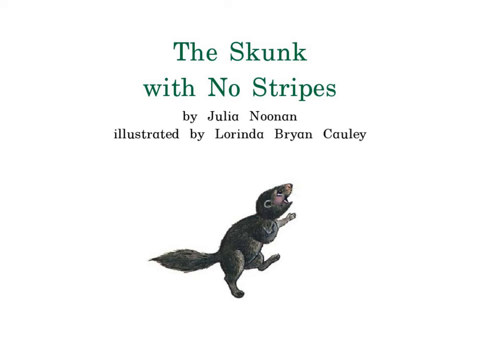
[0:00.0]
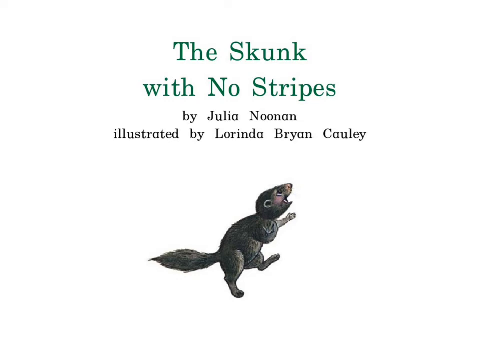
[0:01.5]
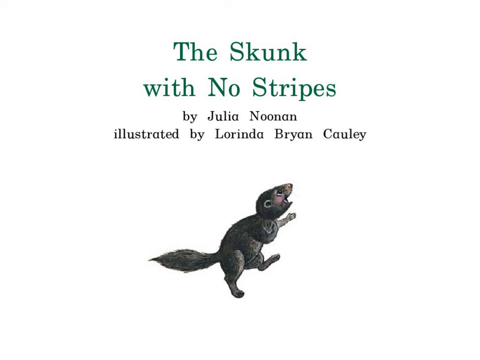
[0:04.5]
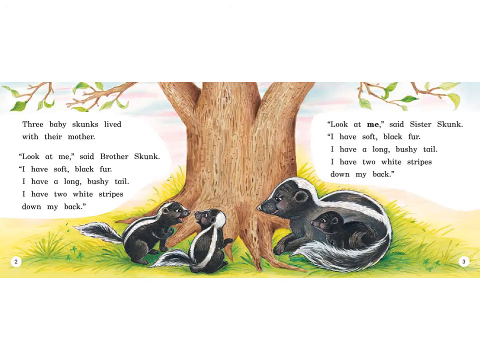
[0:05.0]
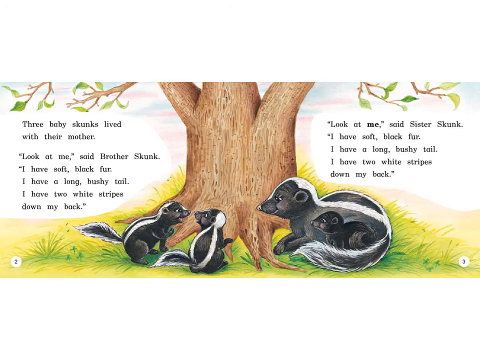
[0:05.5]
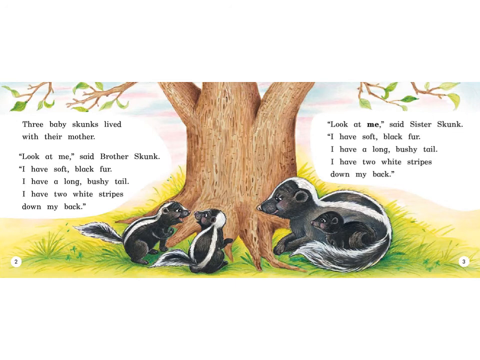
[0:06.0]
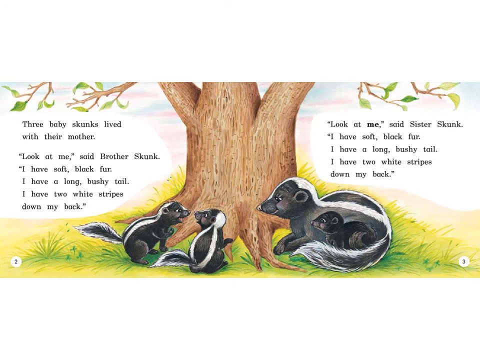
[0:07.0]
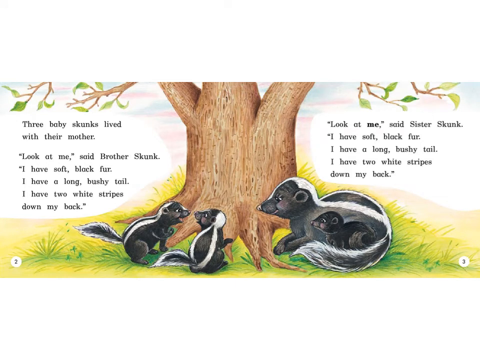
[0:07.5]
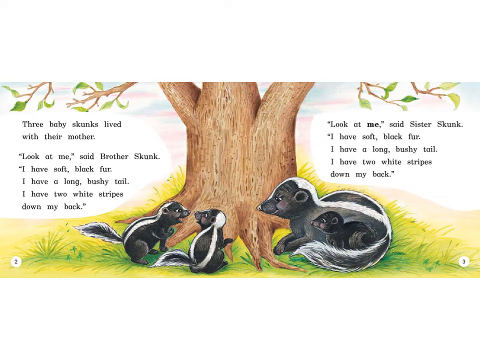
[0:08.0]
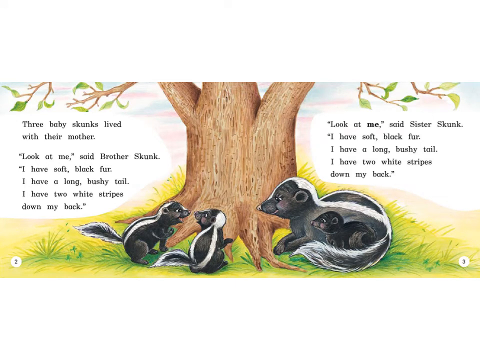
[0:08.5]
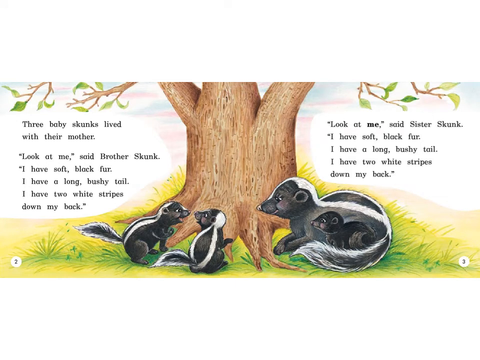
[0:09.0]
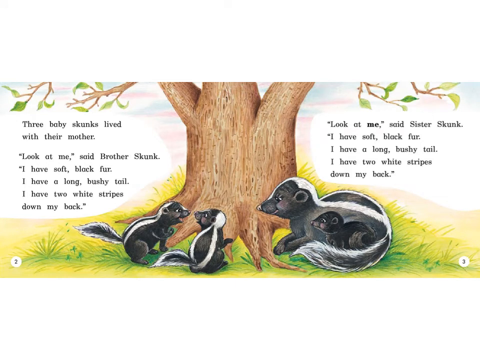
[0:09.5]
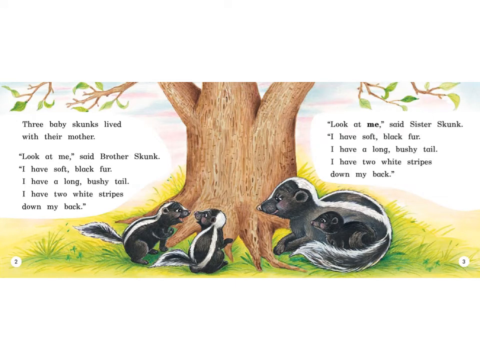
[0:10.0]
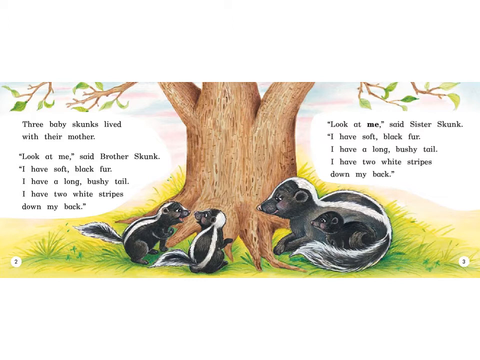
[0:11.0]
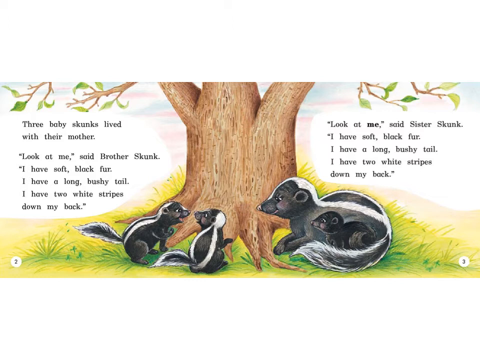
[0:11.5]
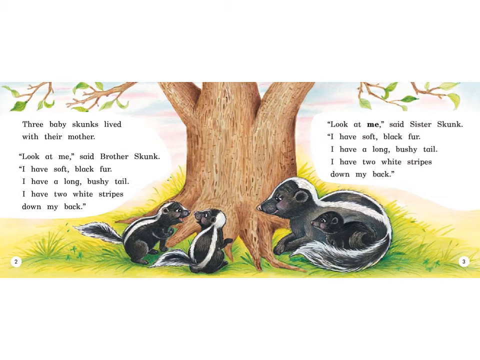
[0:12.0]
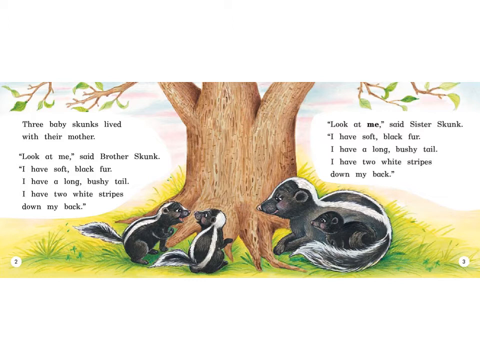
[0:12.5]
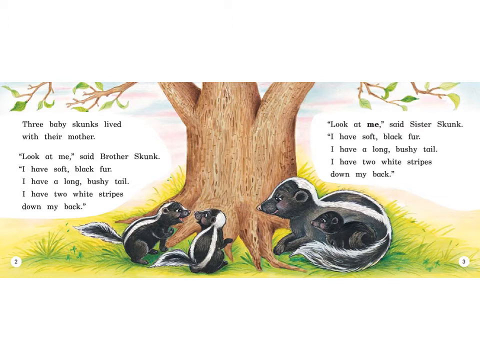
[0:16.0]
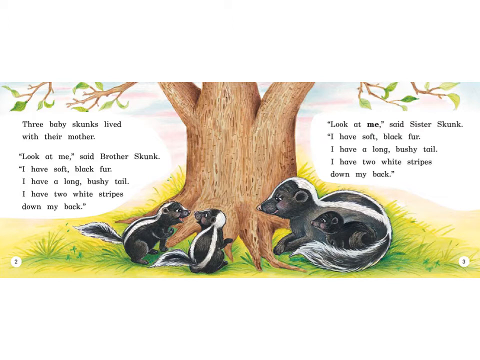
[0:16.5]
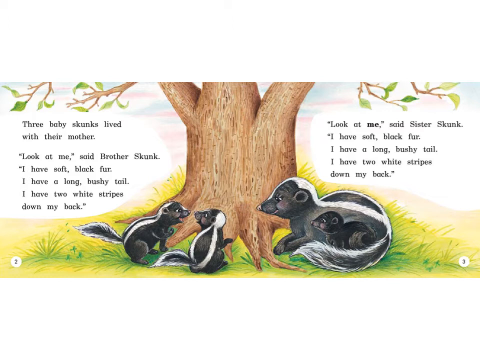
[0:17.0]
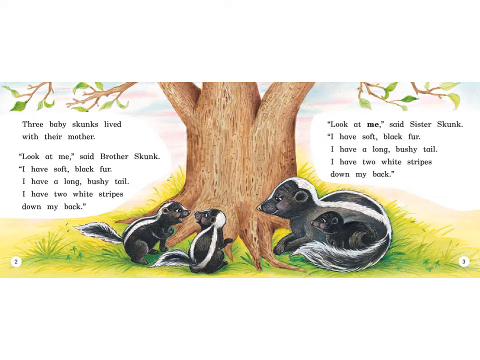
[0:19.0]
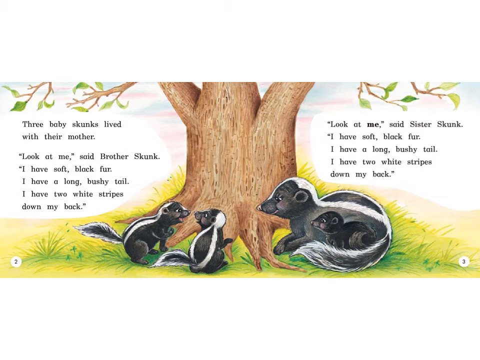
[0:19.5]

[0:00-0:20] The first page reads "The skunk with no stripes by Julia Nonan illustrated by Lorinda Brian Cowley." The video moves to the second page, which has a picture of three skunks seated below a tree in a forest. Text on the page reads "Three baby skunks lived with their mother. Look at me, said brother skunk. I have soft black fur. I have a long bushy tail. I have two white stripes down my back. Look at me, said sister skunk. I have soft black fur. I have a long bushy tail. I have two white stripes down my back." All of the skunks stay in one spot and do not move.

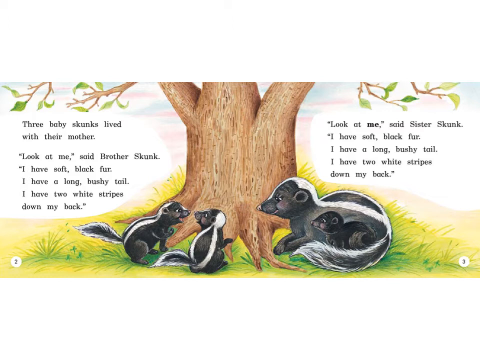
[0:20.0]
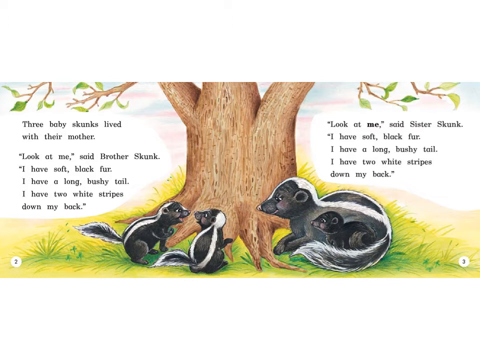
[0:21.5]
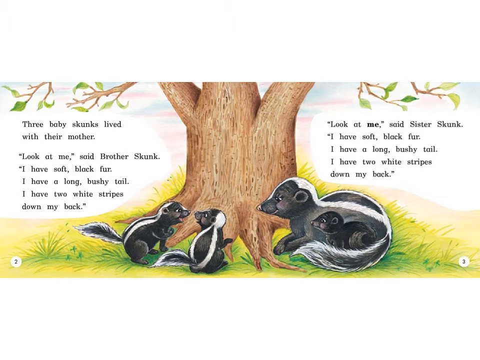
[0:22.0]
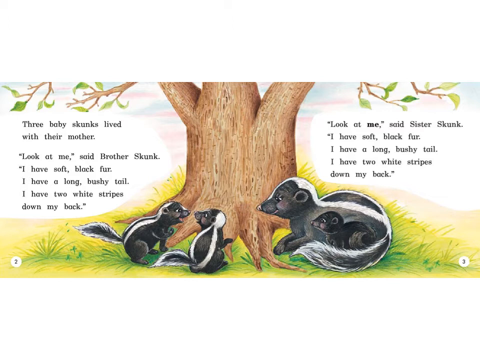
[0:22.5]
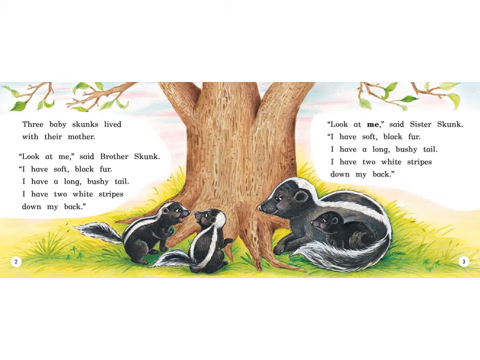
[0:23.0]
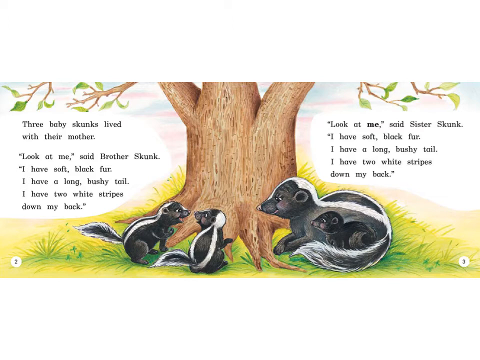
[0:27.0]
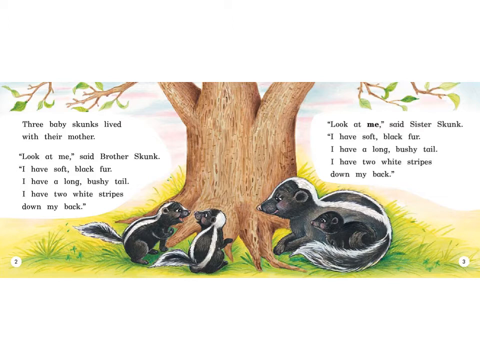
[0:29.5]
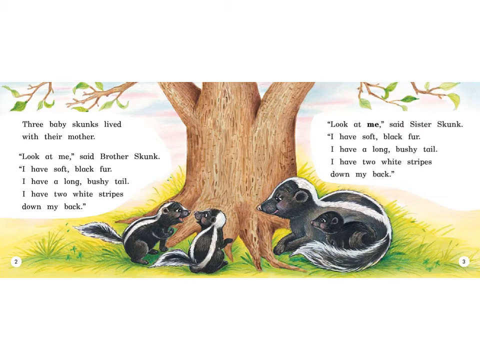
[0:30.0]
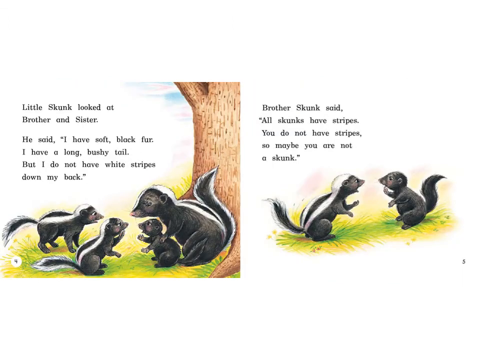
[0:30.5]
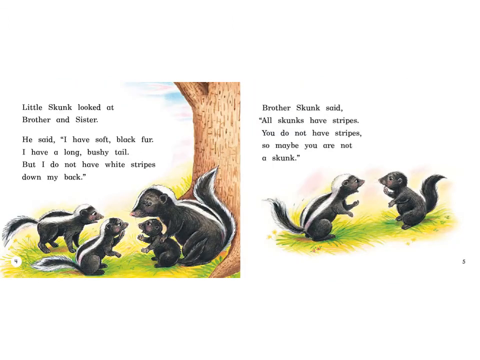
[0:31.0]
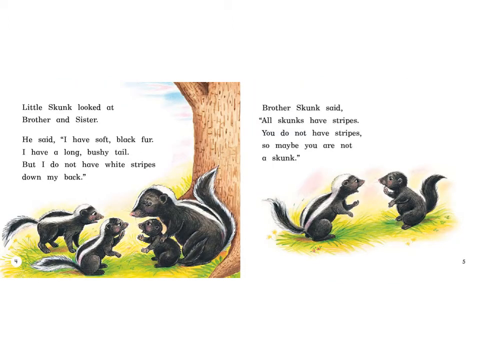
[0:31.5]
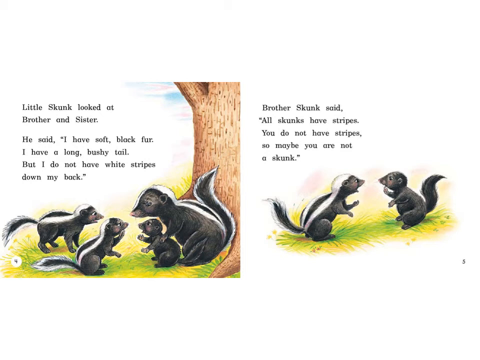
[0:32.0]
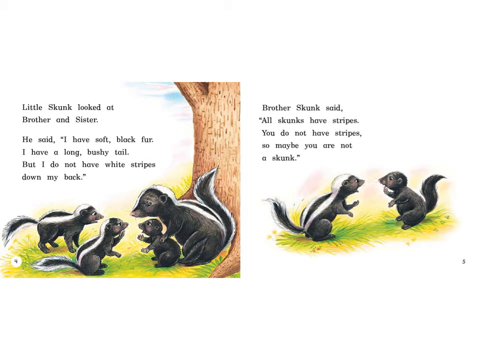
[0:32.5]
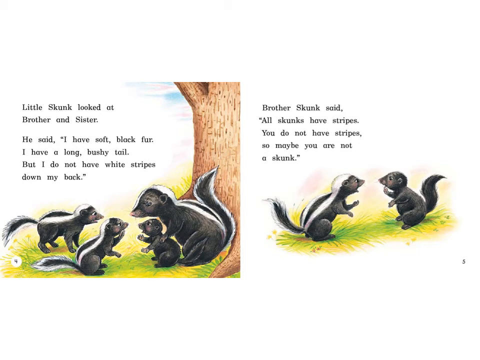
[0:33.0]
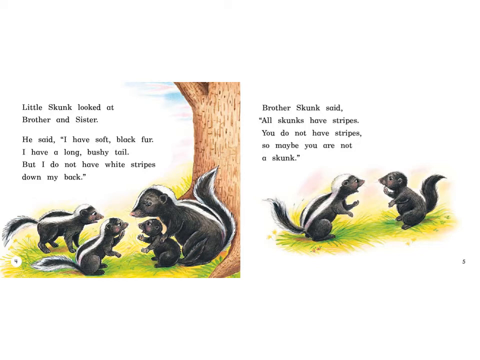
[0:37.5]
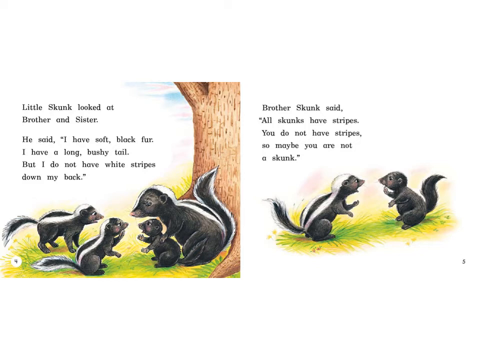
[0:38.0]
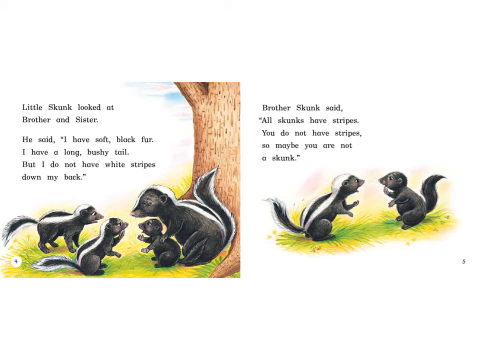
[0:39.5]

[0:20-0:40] Three baby skunks are together with their mother, seated in a garden with a tree behind them, and both of them are seated in the grass. Text reads "Three baby skunks lived with their mother. Look at me, said brother skunk. I have soft black fur. I have a long bushy tail. I have two white stripes down my back." It continues: "Look at me, said sister skunk. I have soft black fur. I have a long bushy tail. I have two white stripes down my back." In the next scene the skunks look like they are arguing, and the text reads "Little skunk looked at brother and sister. He said, I have soft black fur, I have a long bushy tail, but I do not have white stripes down my back. You do not have stripes, so maybe you are not a skunk." They appear to continue arguing.